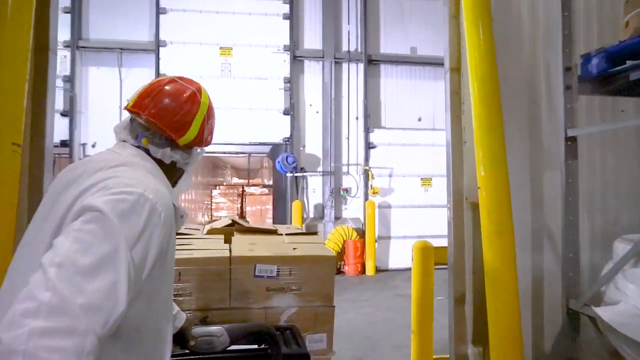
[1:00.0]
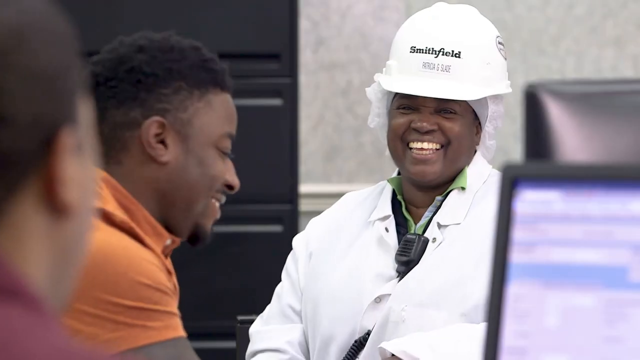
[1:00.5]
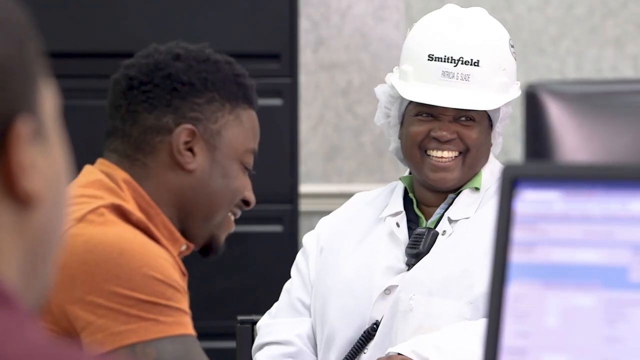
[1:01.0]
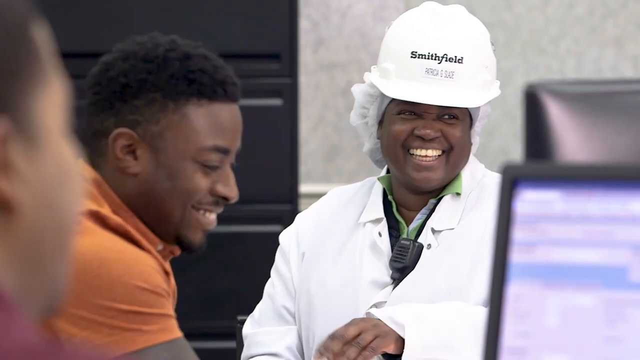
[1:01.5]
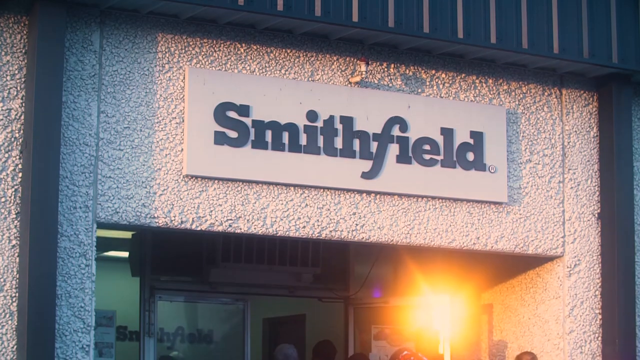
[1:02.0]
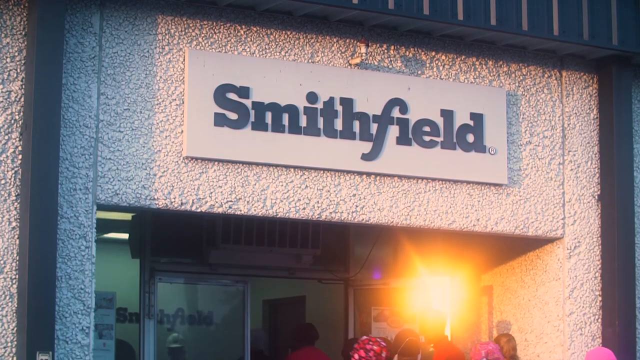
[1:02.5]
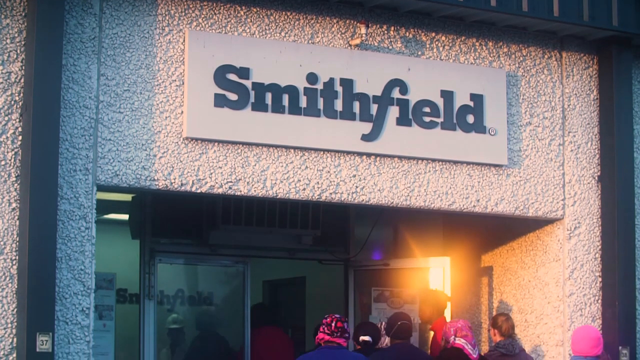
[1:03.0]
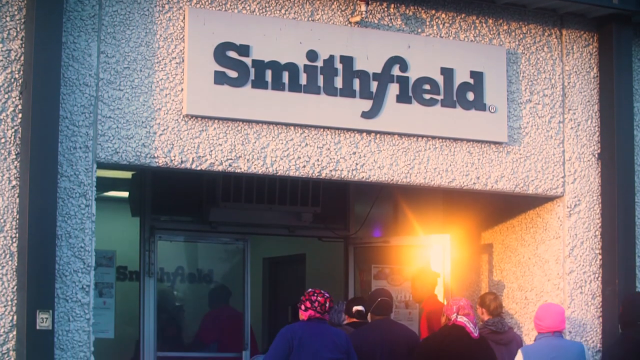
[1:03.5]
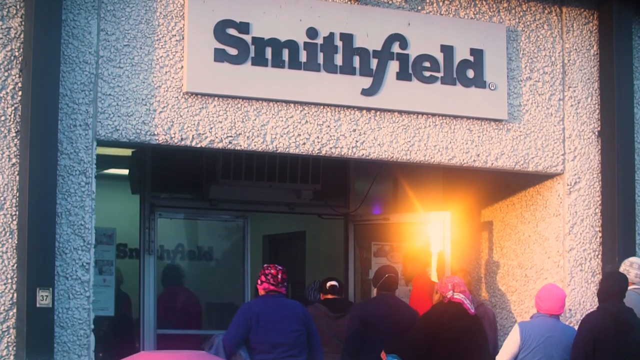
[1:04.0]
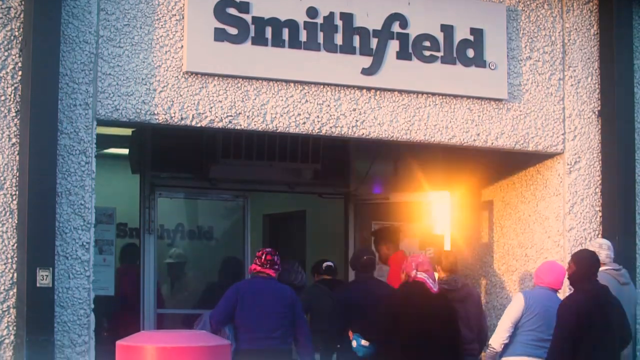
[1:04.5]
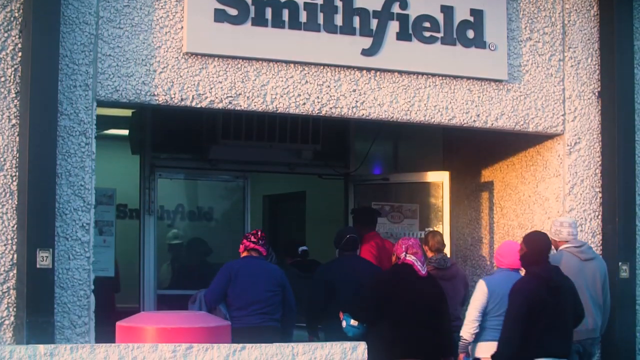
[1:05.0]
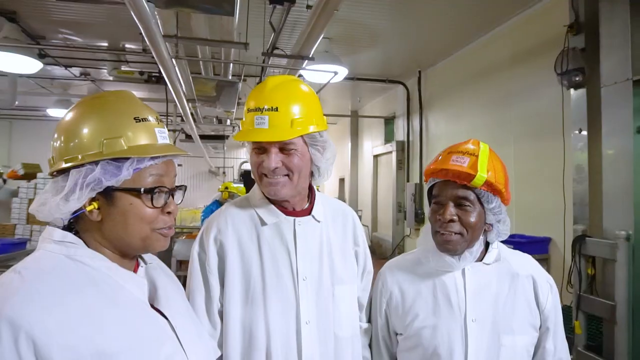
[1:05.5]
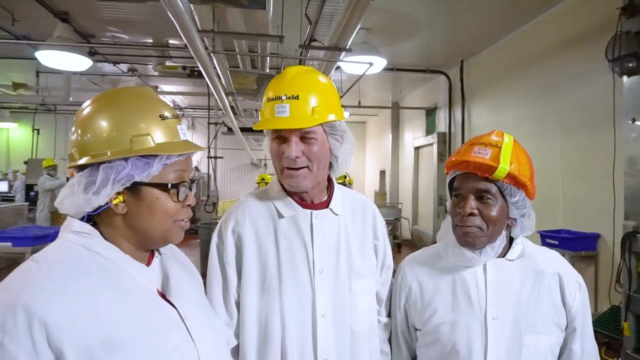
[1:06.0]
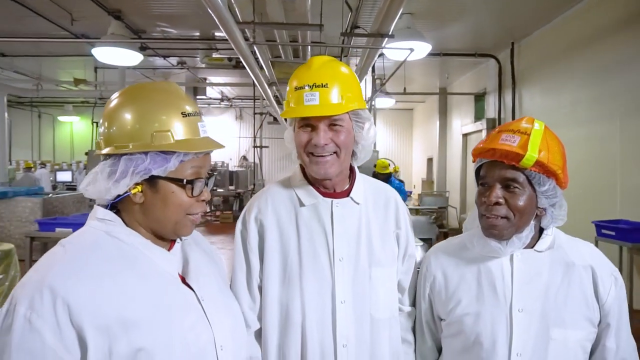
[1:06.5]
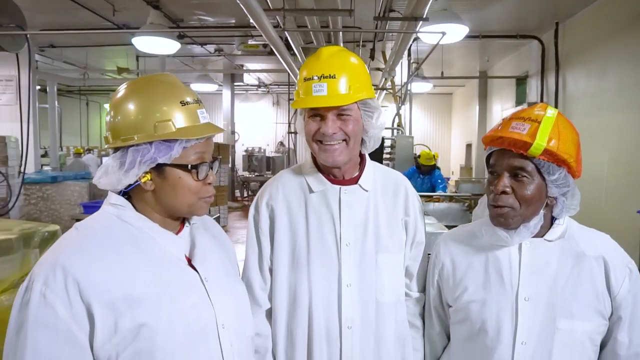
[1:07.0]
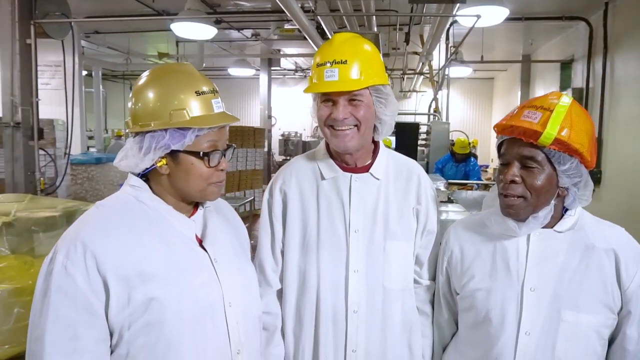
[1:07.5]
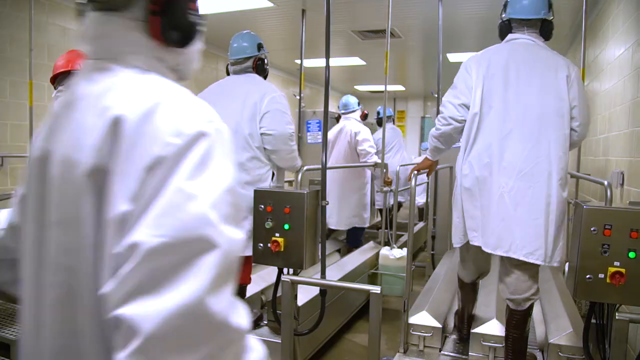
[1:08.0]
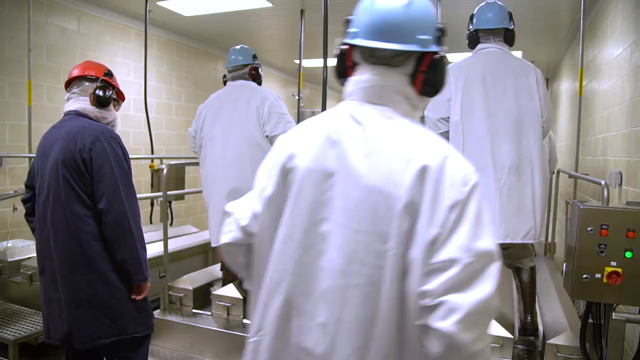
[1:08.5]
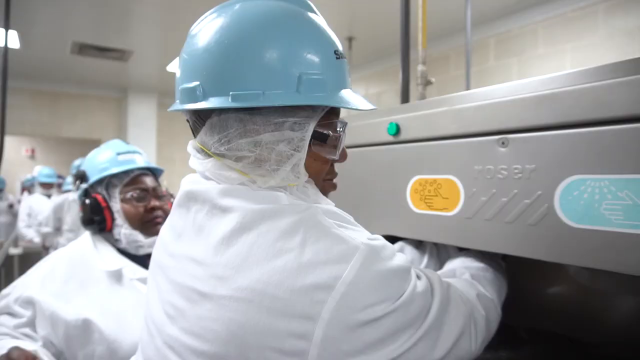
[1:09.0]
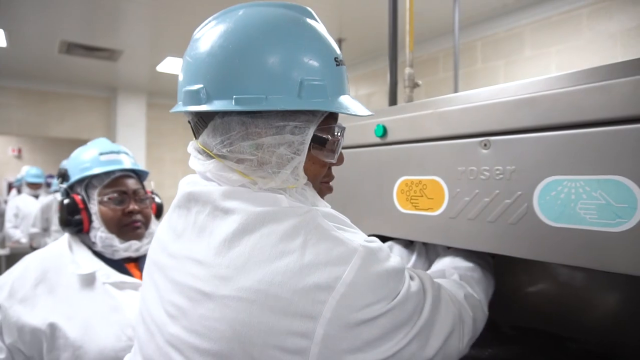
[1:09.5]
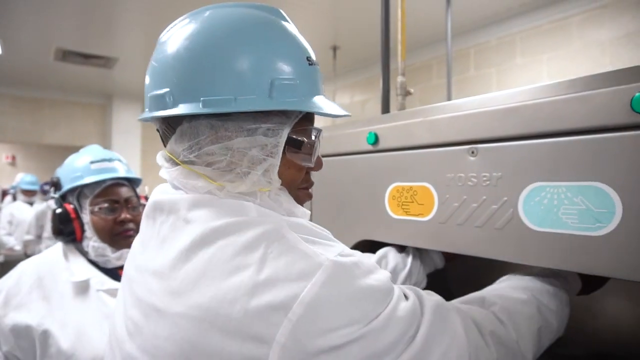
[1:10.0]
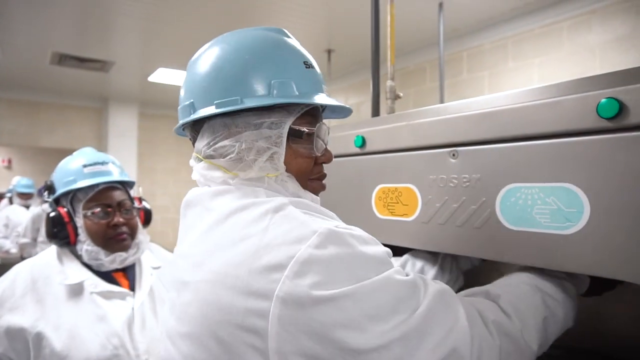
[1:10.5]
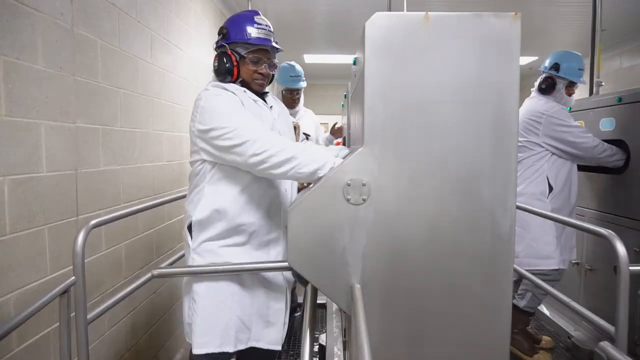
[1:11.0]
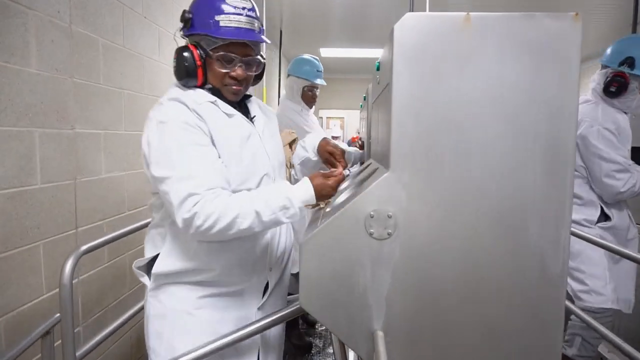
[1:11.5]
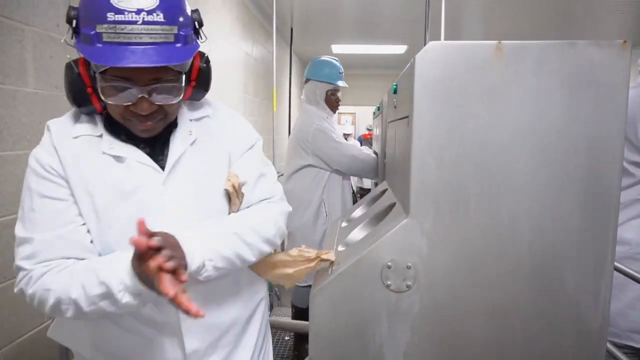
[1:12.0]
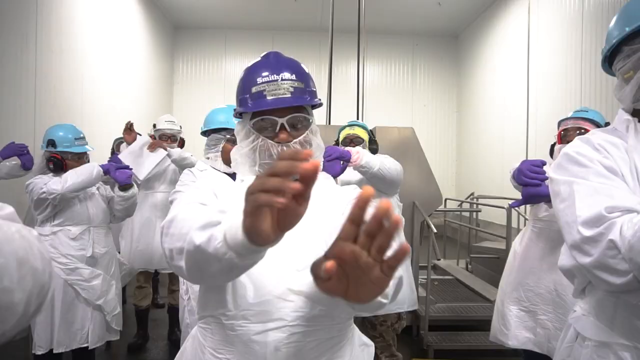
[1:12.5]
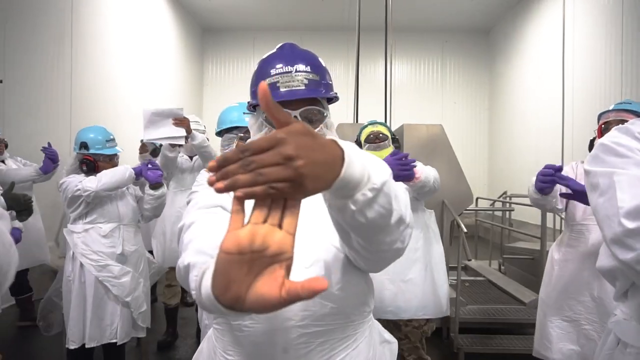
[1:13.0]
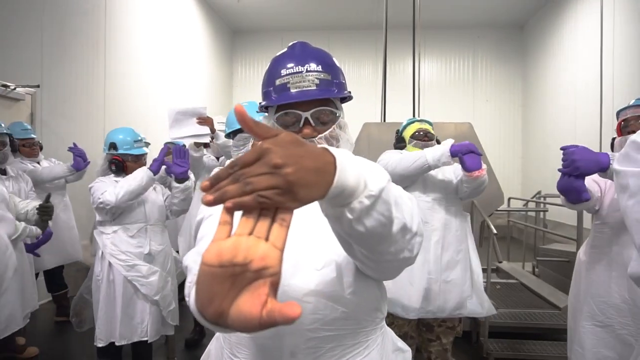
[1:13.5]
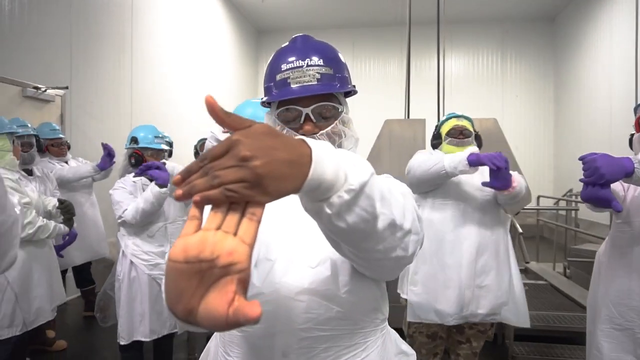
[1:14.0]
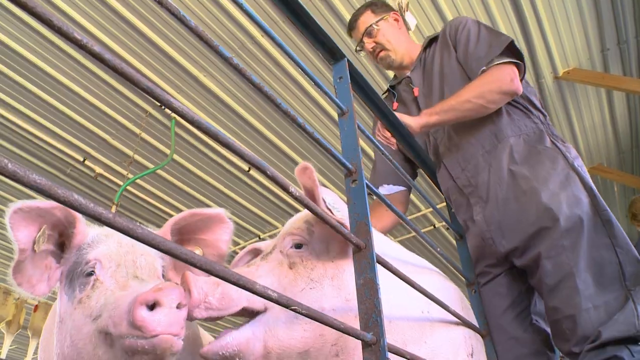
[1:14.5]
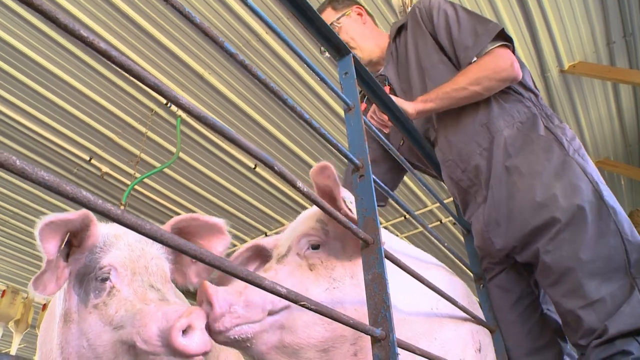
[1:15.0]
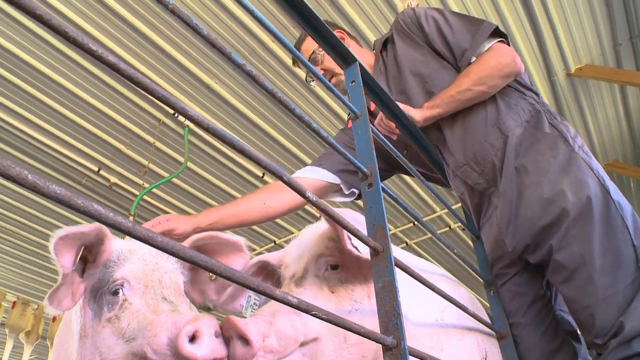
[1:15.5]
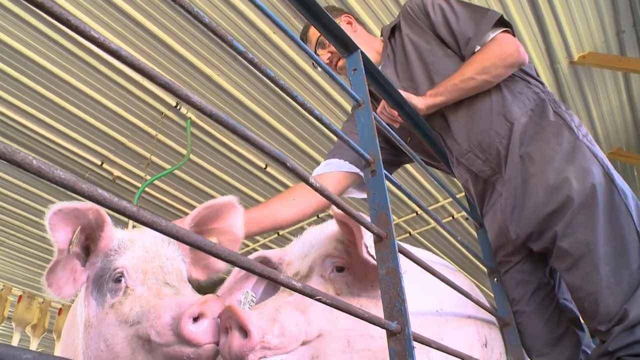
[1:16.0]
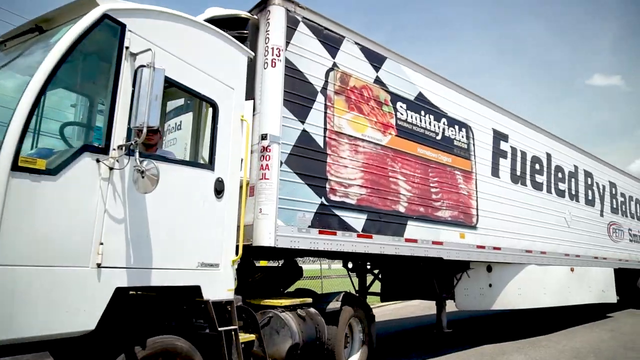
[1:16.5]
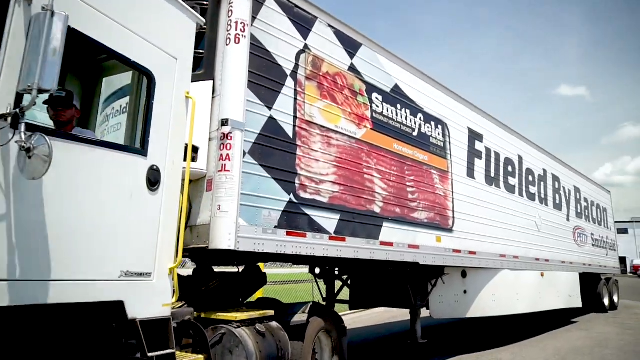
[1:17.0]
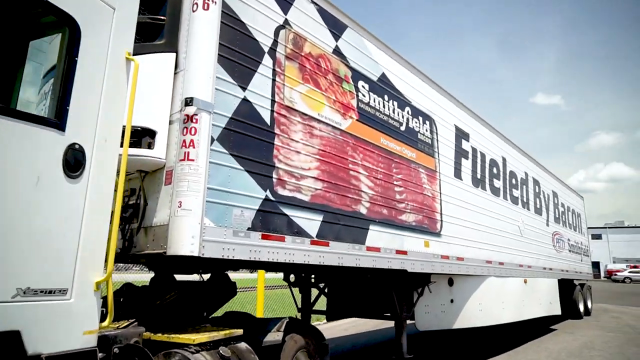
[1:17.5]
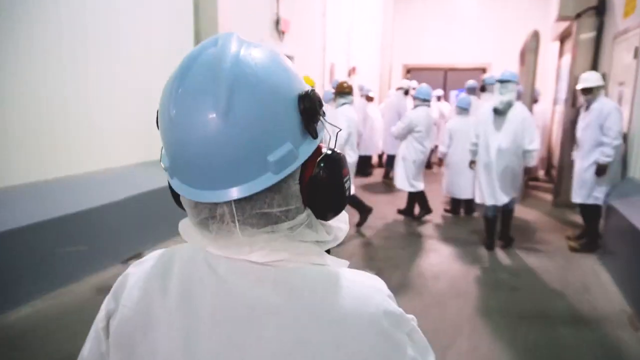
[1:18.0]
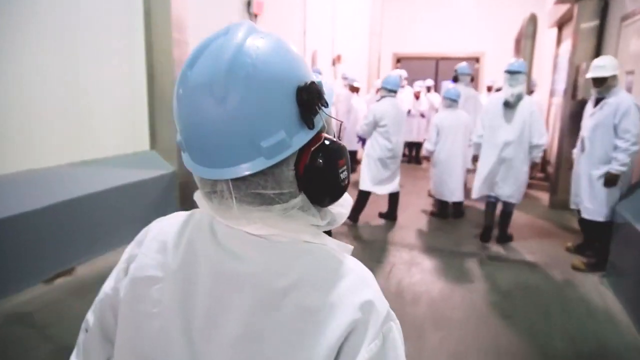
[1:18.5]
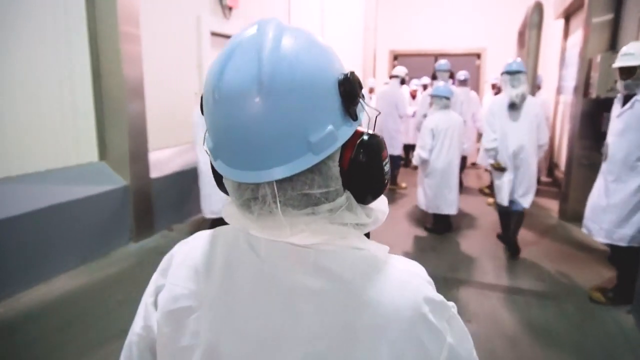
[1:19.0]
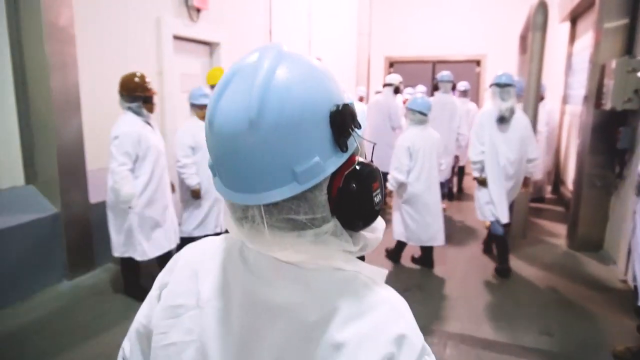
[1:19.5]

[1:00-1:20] A person in a white hard hat and a hairnet smiles and jokes with a man in an orange polo who is speaking to her. The outside of the building appears again with the Smithfield logo, and the camera pans down to show many people walking in through the main door. Three individuals in hard hats speak to each other, nodding and smiling. Some people walk over the conveyor belts, and others walk through and do hand stretches. A man looks at the pigs in the cage, and outside there is a lorry with the Freshfields logo on it. A large number of people walk through the warehouse, all wearing their hard hats and their cloaks, which are overalls.